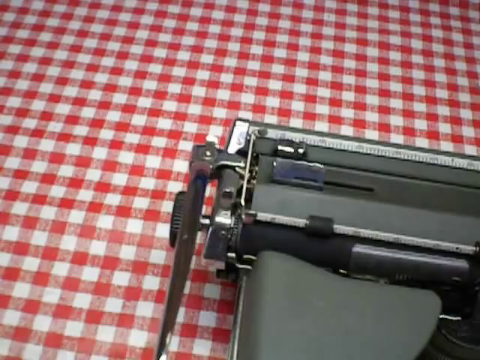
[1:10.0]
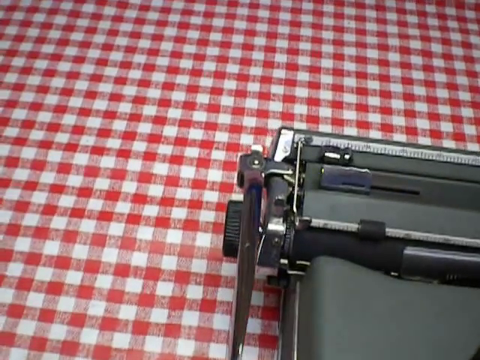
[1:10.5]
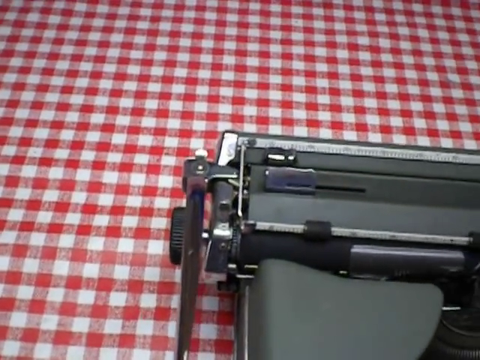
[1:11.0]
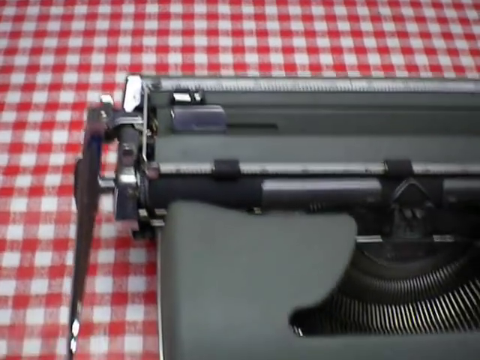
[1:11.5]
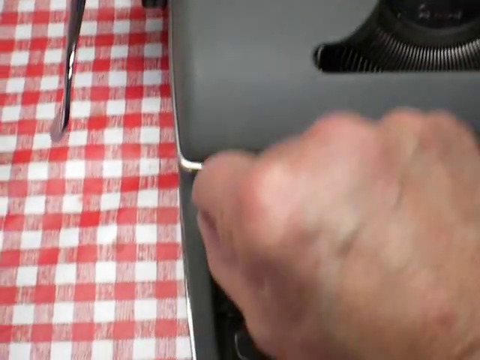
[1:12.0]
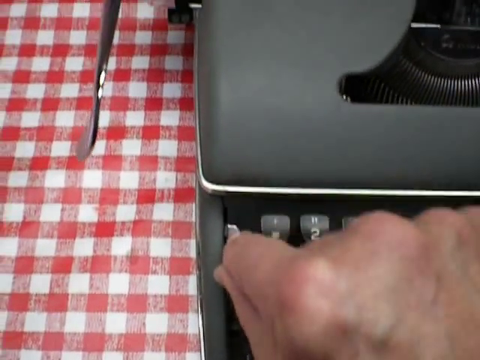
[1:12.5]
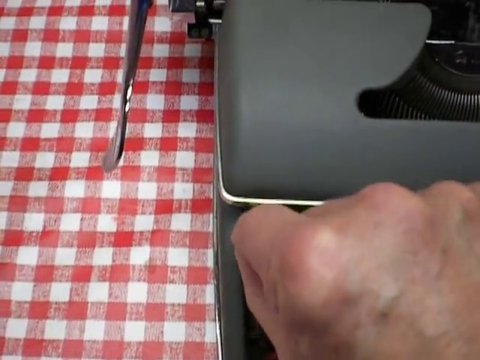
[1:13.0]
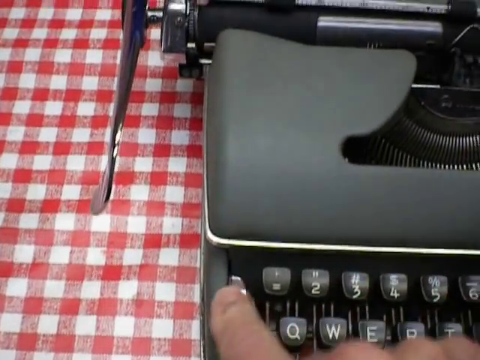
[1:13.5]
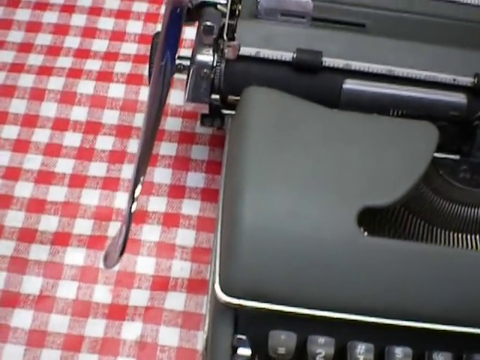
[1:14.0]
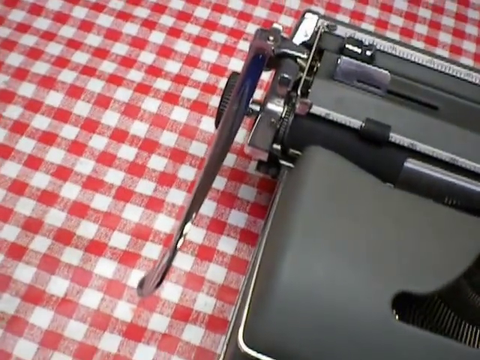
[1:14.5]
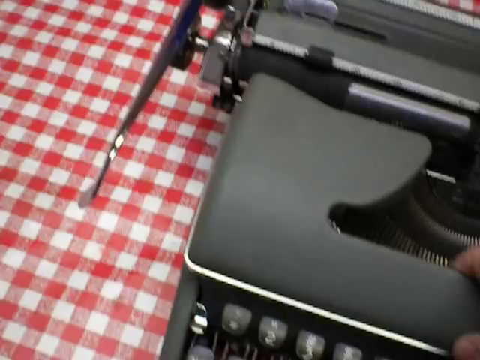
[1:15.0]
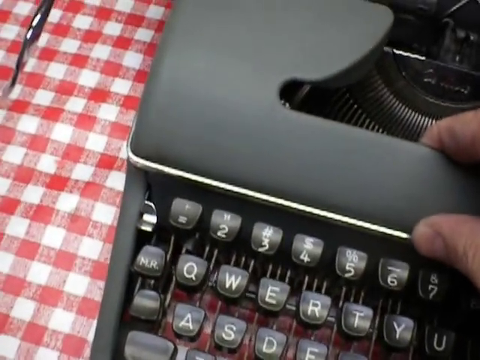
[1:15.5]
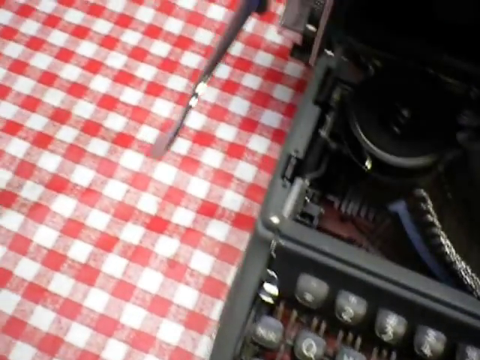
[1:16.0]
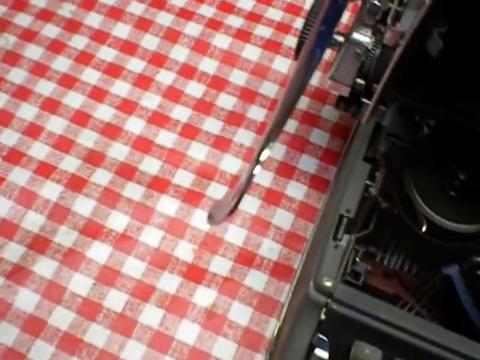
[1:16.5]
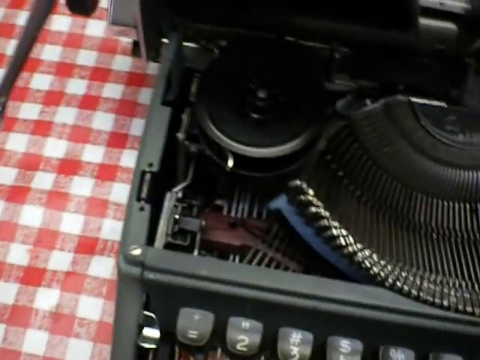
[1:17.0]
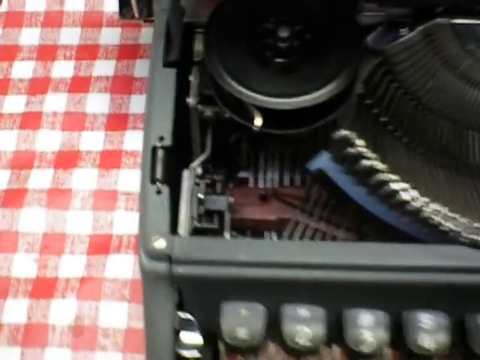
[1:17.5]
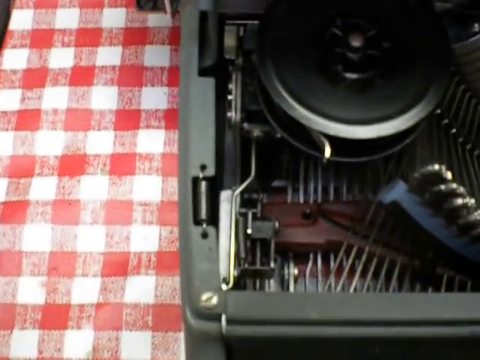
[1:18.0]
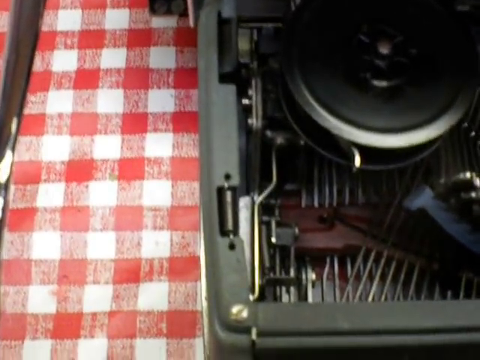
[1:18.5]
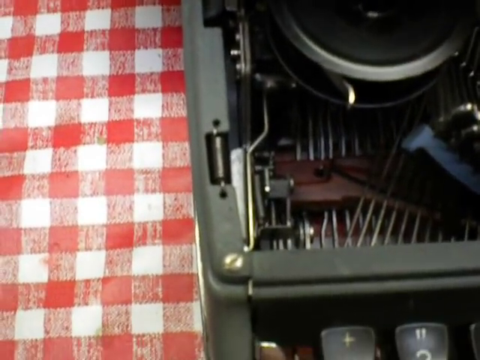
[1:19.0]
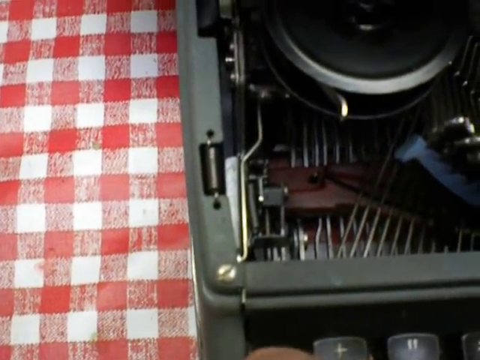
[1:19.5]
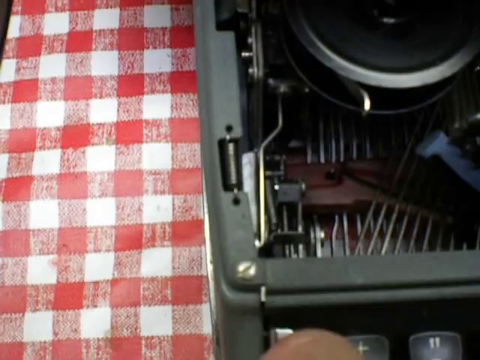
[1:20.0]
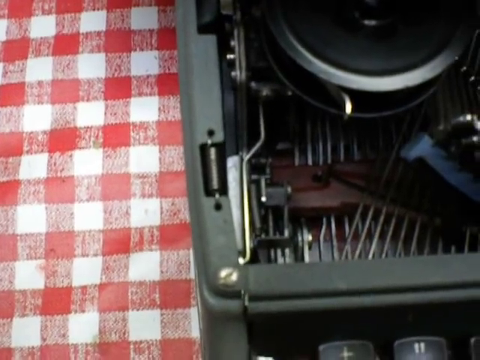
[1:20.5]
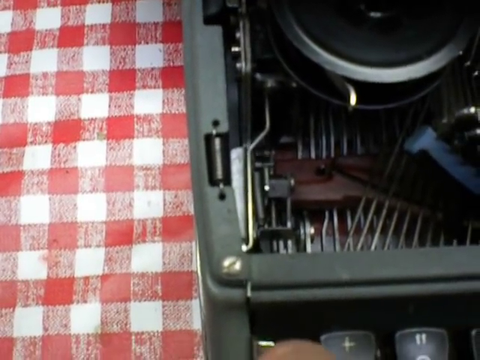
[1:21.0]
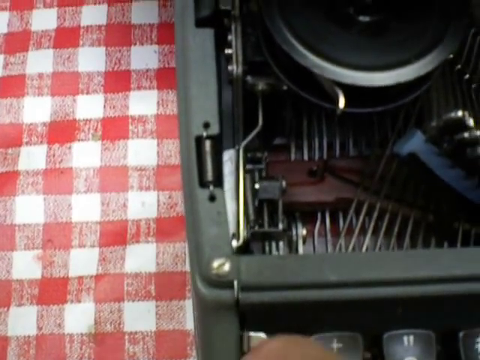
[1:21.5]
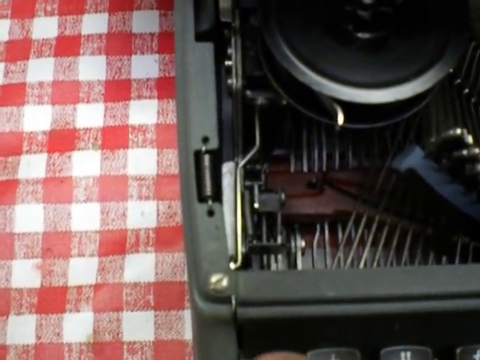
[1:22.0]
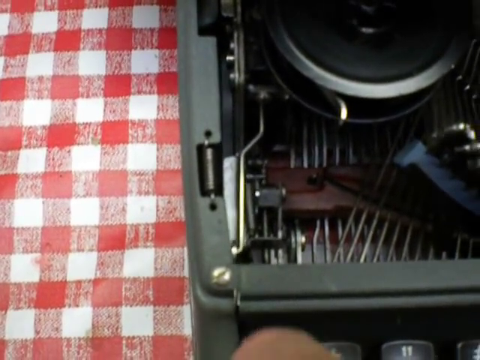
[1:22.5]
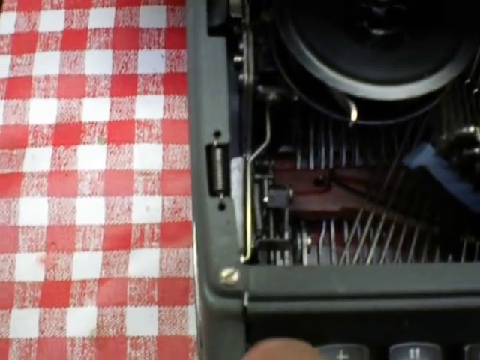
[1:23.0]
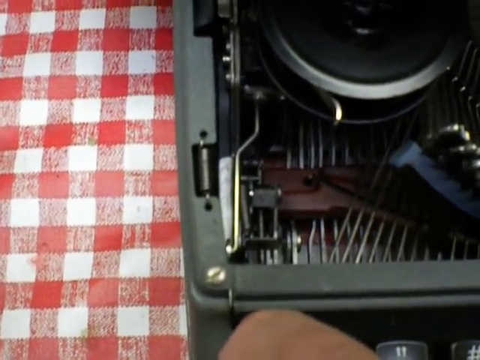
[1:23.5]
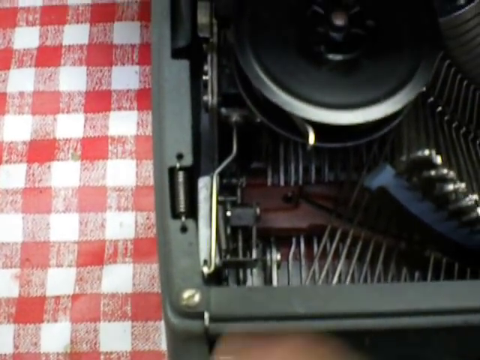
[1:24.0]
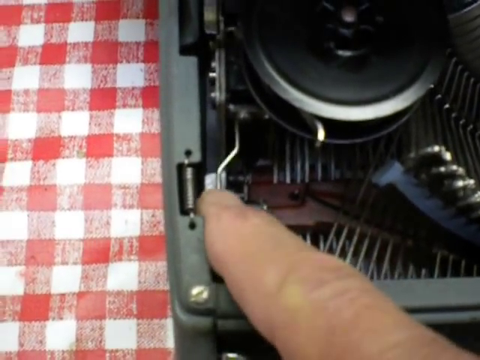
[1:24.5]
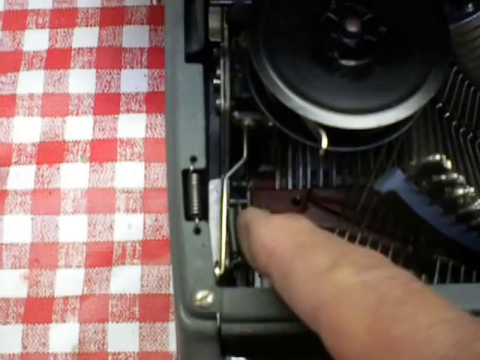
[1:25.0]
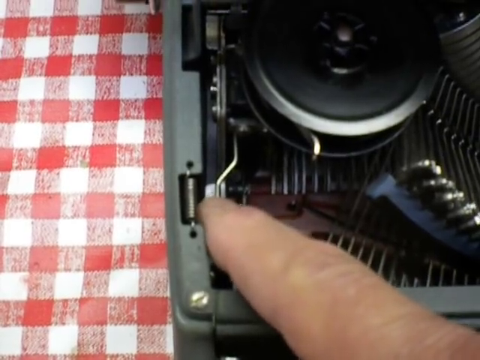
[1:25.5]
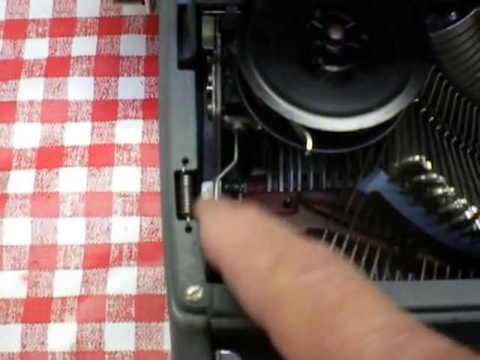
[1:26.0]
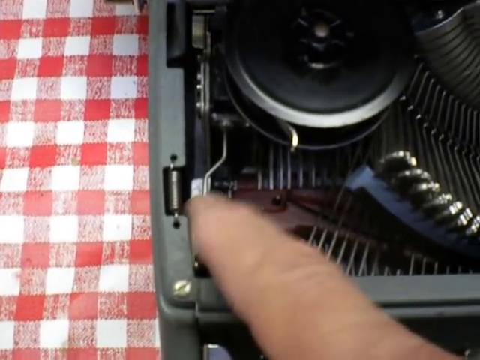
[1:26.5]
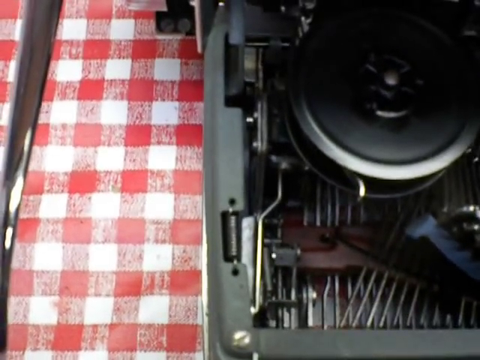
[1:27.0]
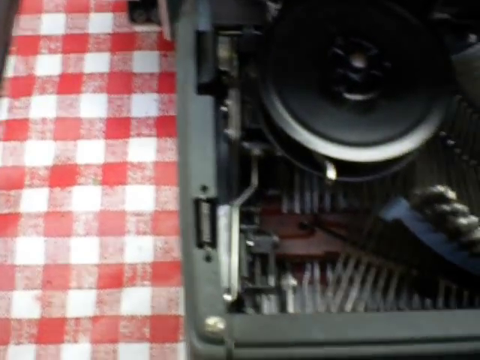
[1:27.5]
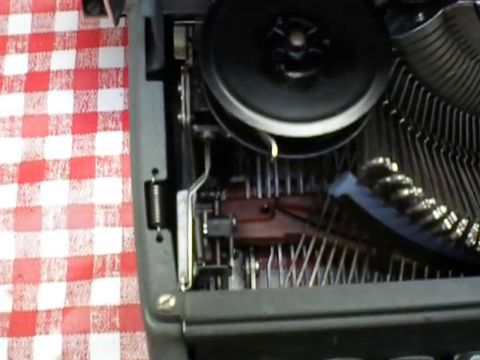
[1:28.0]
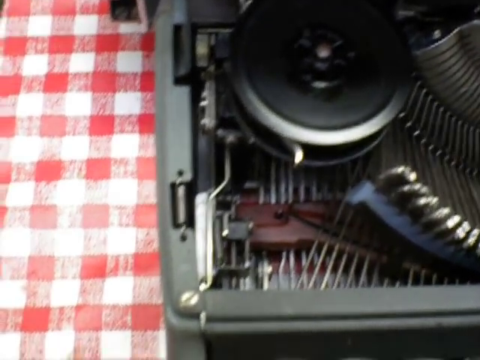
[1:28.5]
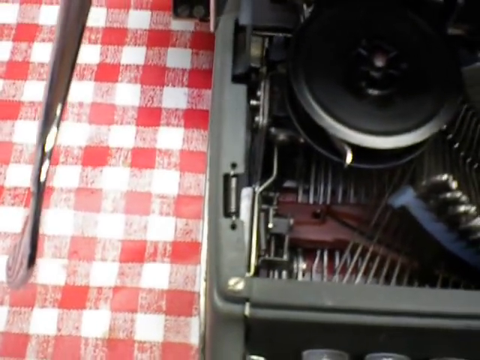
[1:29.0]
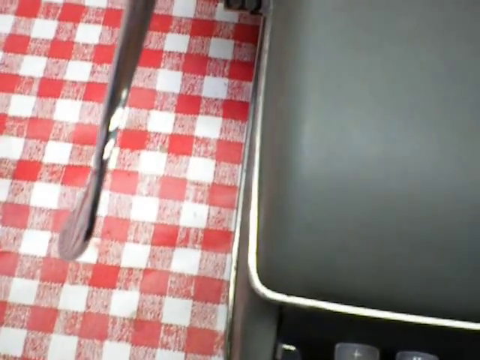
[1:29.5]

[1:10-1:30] A vintage gray typewriter sits on a table covered by a tablecloth with a small red and white checked design, and only the left corner of the typewriter is in view. A man uses his thumb and index finger to move a small silver lever to the left of the row of number buttons up and down, his other fingers folded under. With the same hand he opens the top cover of the typewriter, revealing a metal bar that moves when he switches the silver lever up and down. He points to this lever with his index finger several times and touches it, then closes the gray top. Only the upper left-hand corner remains in view, showing part of the cylinder and the handle on the left that moves the cylinder back to its position.